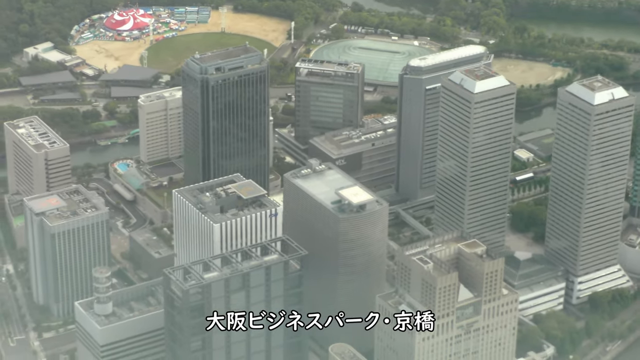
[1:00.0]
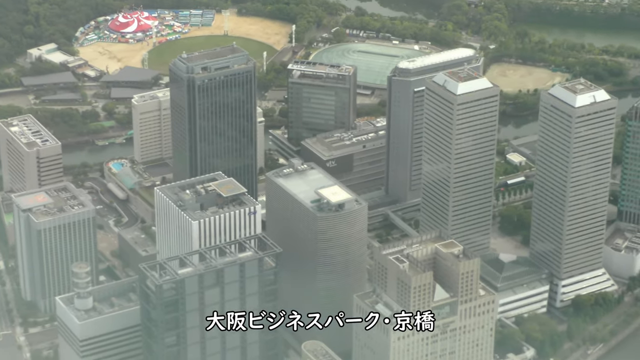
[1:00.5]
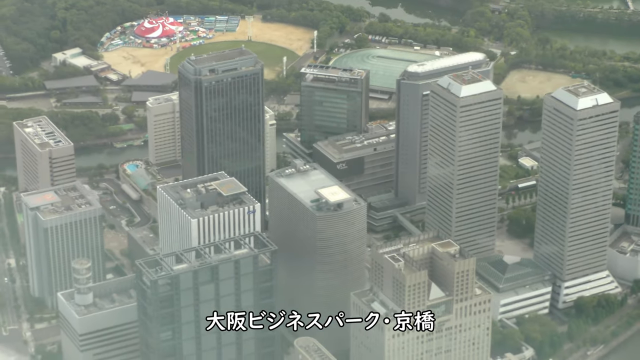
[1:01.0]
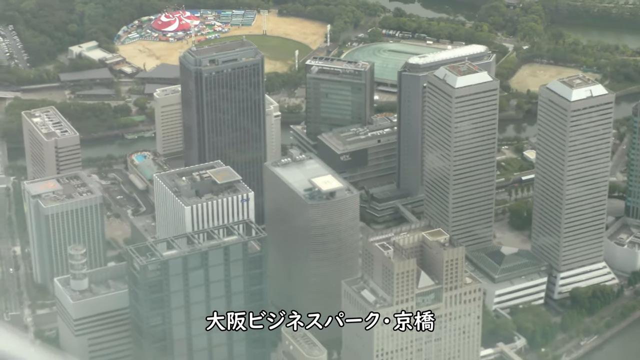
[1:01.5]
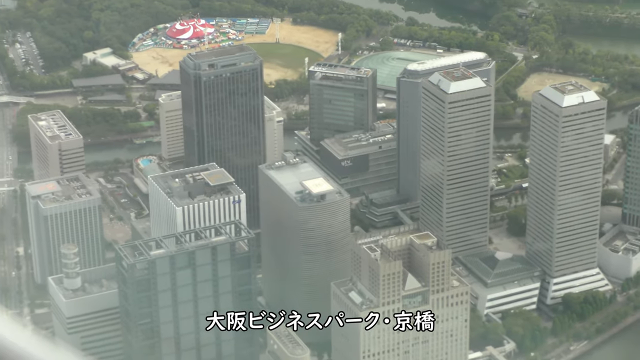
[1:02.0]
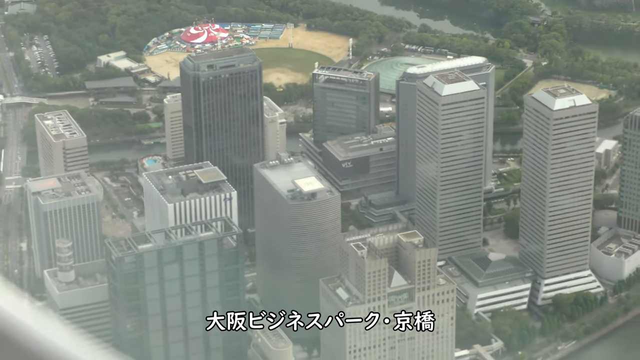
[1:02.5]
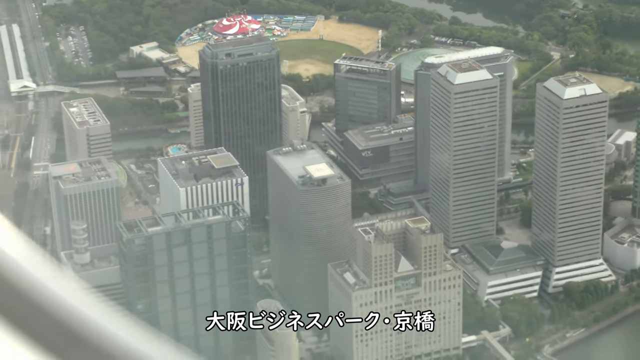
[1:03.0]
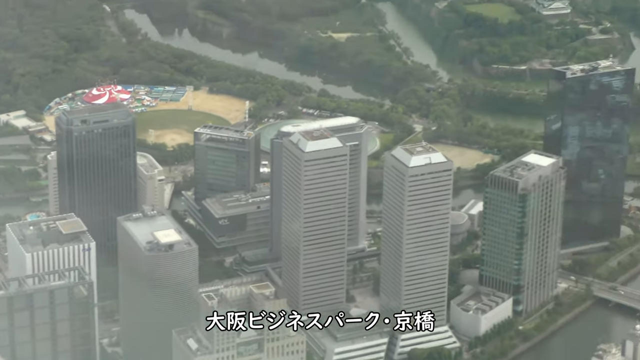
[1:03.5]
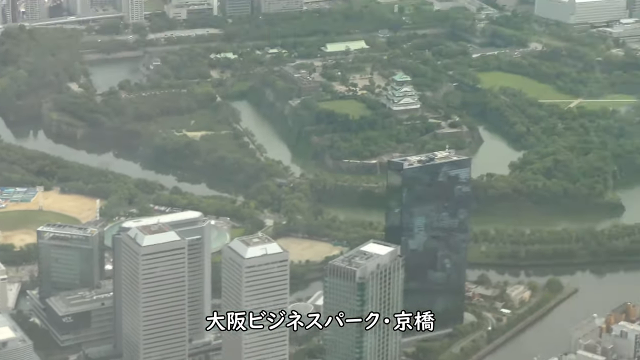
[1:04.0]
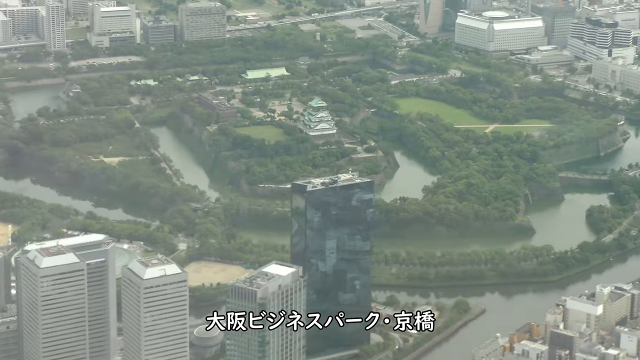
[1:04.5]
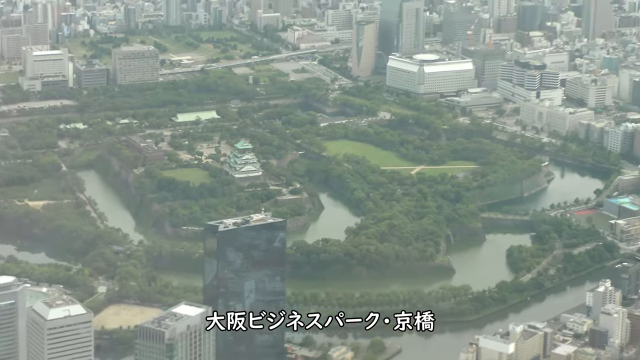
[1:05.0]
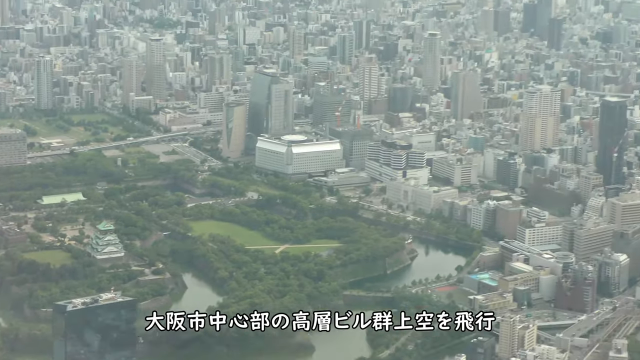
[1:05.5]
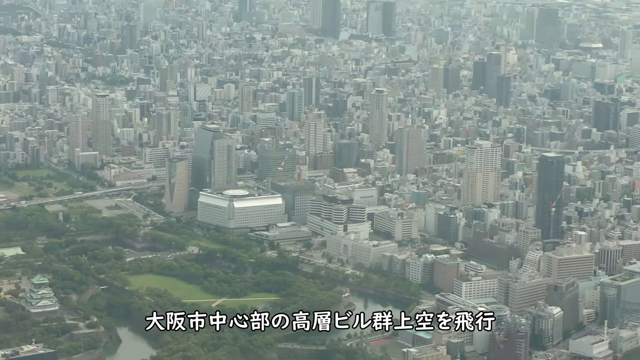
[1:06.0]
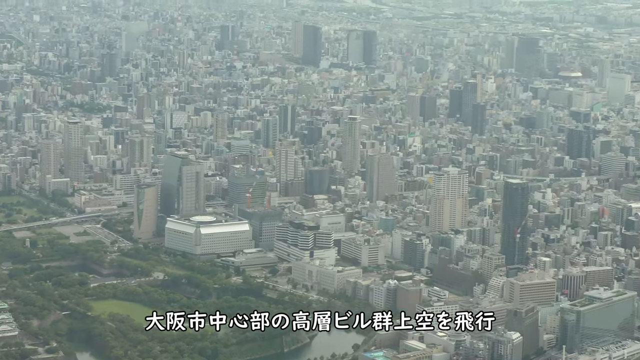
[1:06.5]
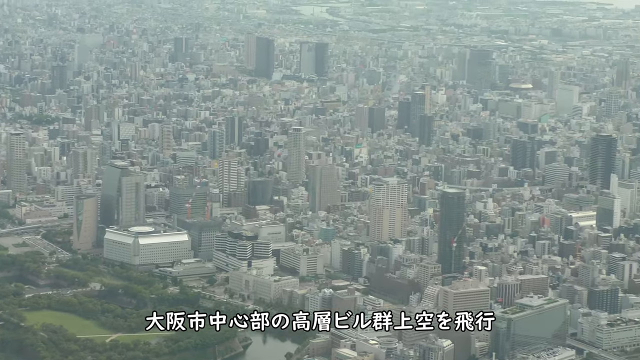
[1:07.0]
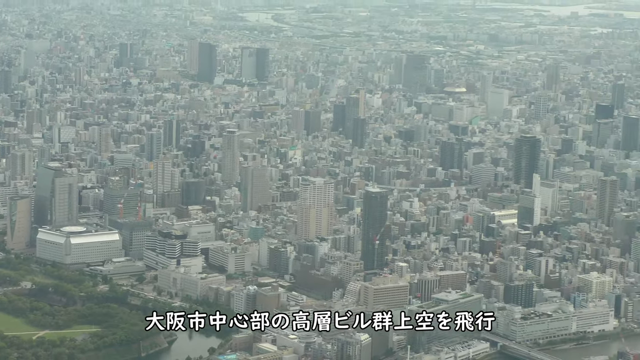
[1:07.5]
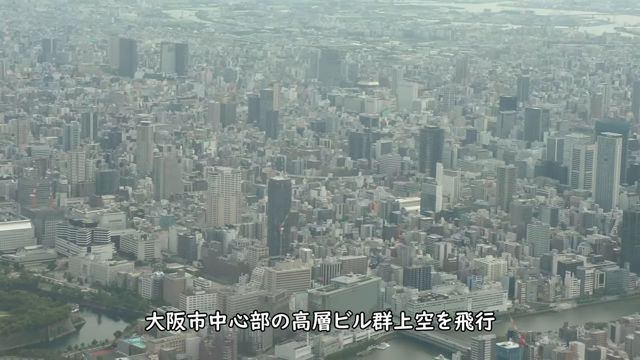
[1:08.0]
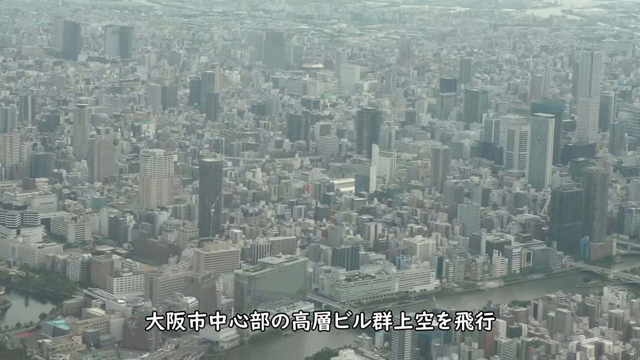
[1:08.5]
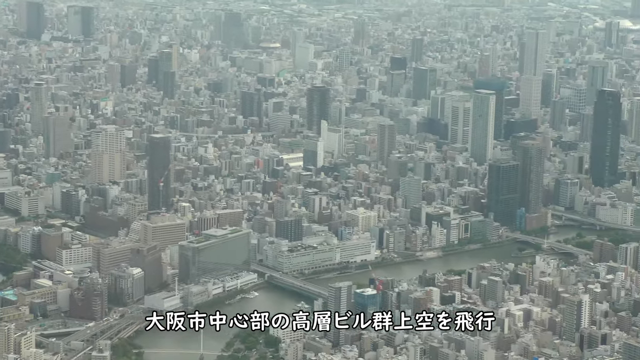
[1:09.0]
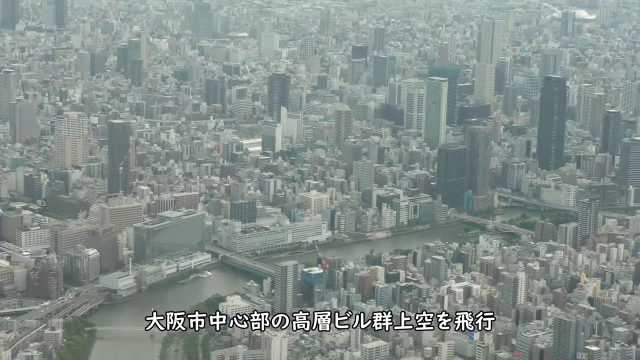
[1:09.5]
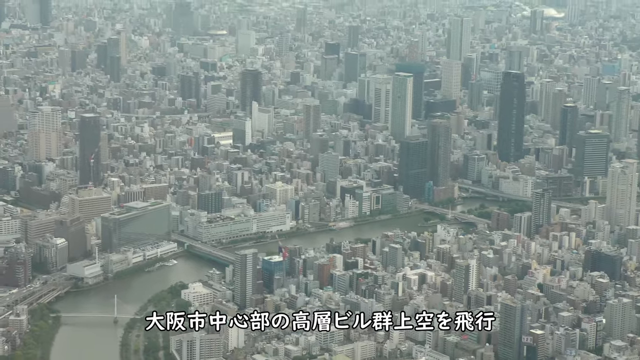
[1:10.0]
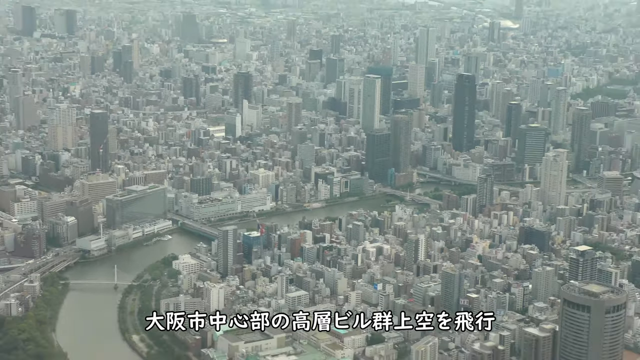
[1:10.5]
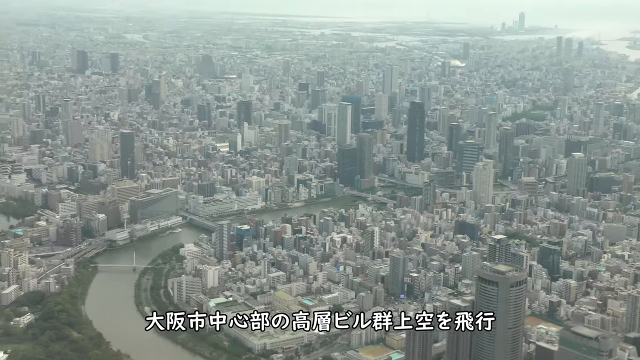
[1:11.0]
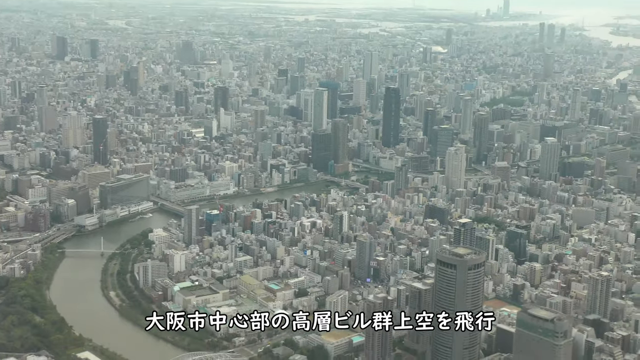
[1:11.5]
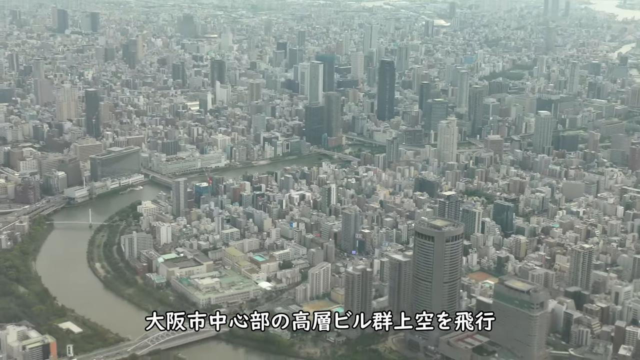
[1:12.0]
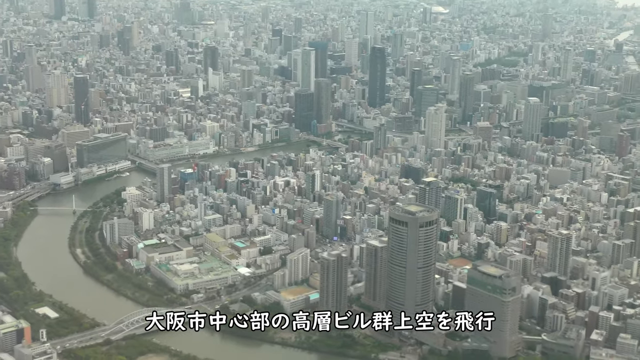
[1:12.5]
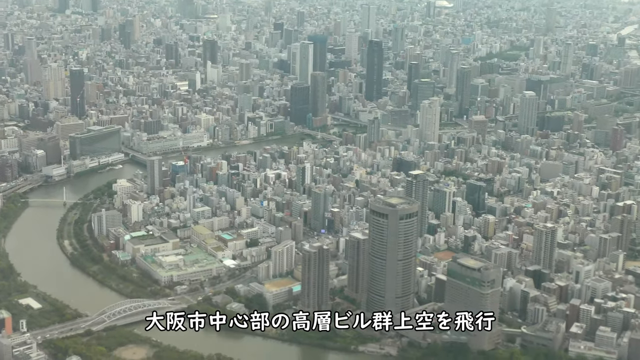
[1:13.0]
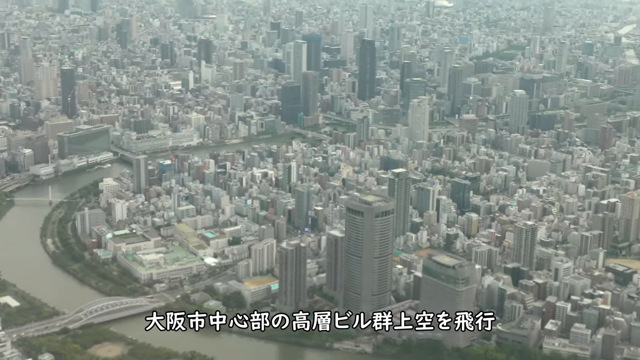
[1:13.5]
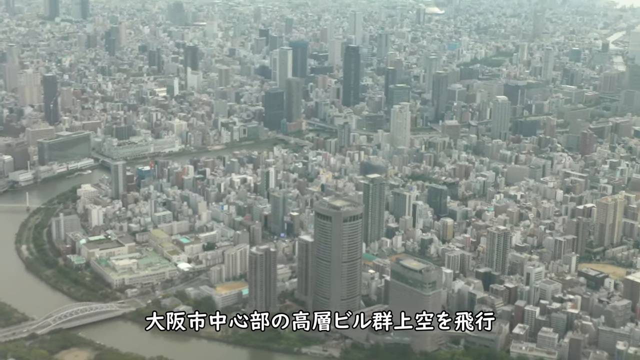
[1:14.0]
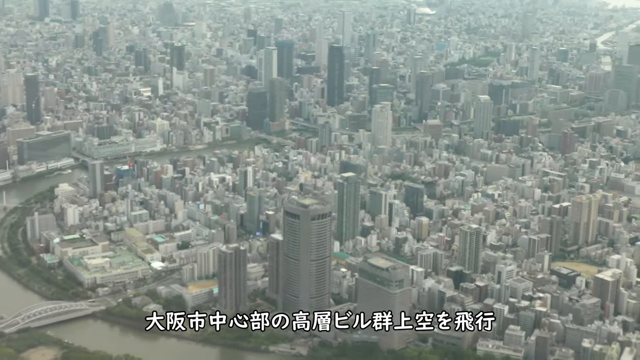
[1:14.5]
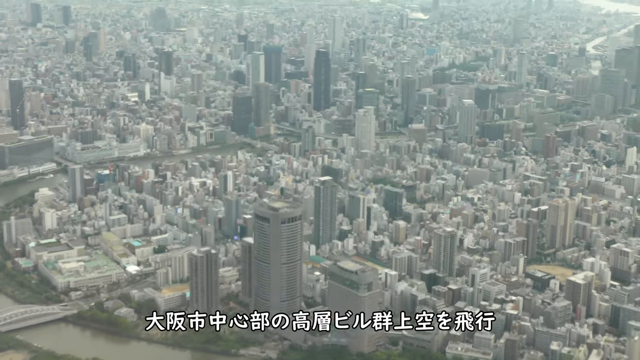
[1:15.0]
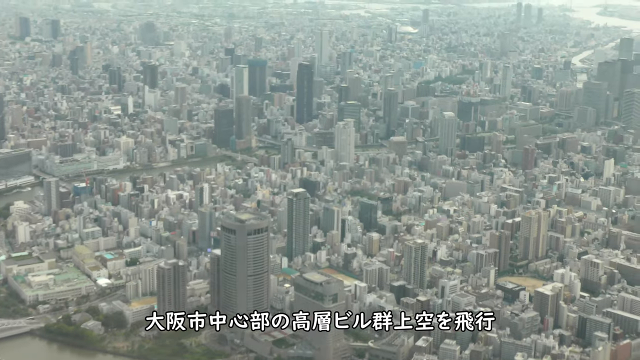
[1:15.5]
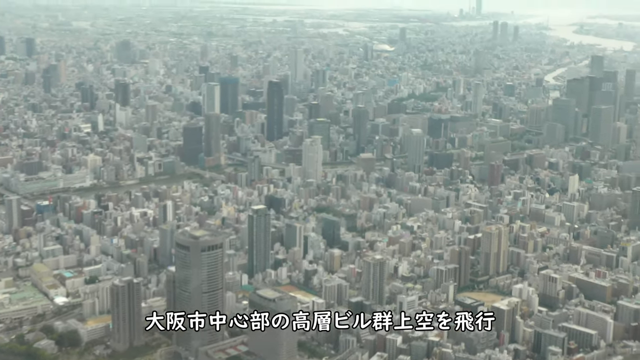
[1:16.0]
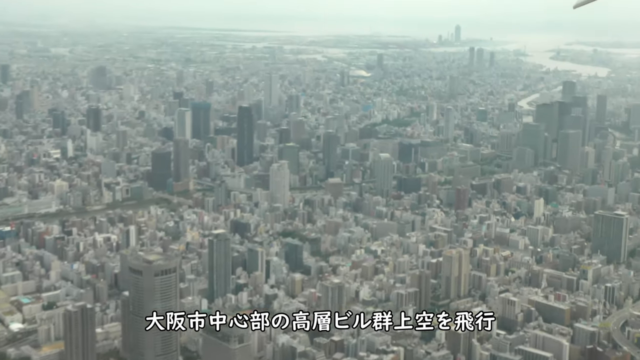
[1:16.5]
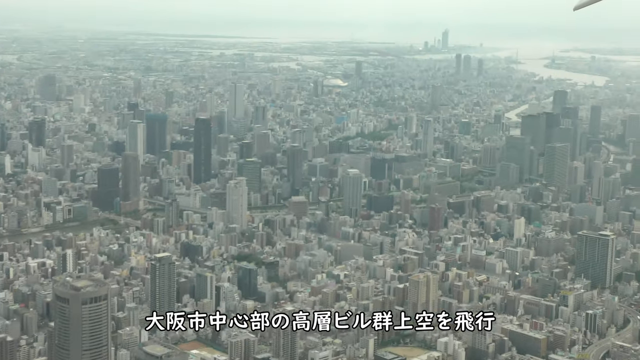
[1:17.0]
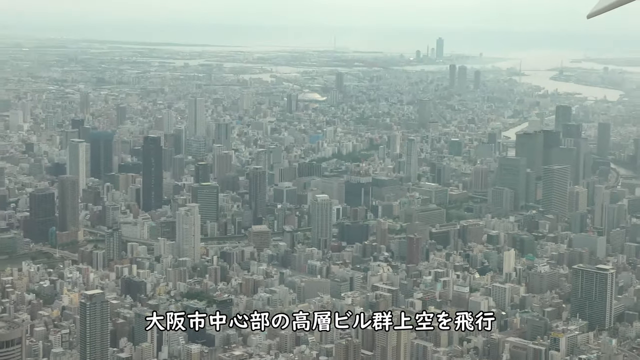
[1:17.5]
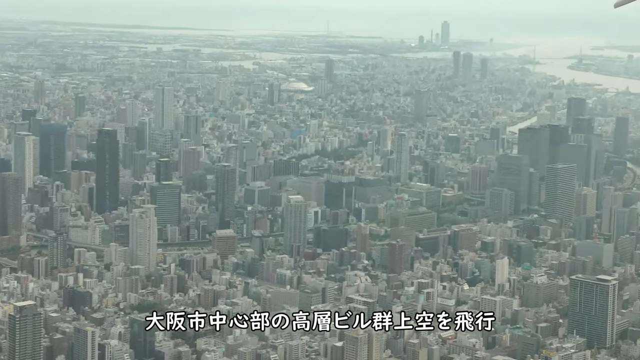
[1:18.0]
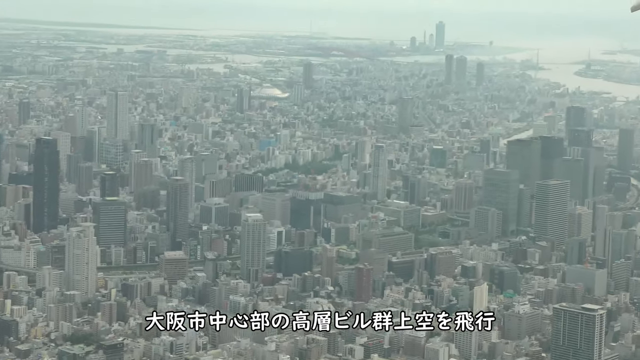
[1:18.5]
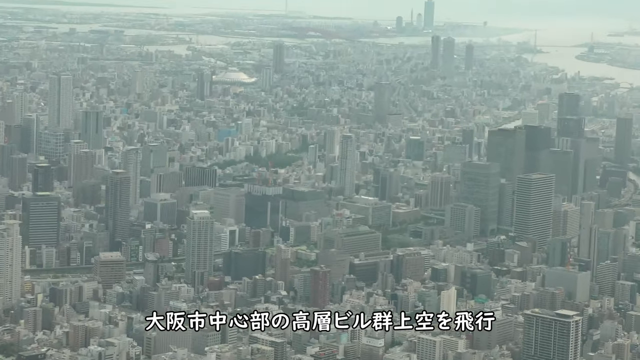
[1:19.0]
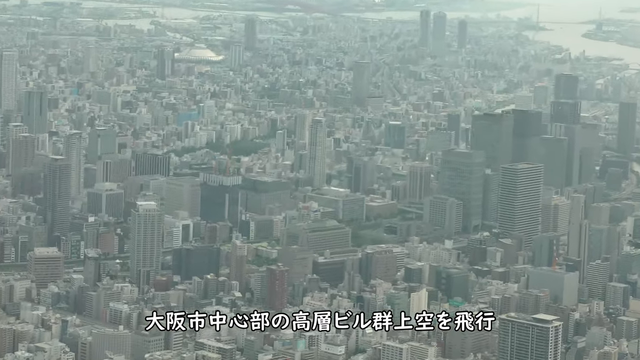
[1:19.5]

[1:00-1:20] The aerial tour of Tokyo continues, showing the park with what appears to be a track and field and a baseball stadium. There is a quick close-up of the center of the park, which has a couple of buildings in the center. The buildings around the park appear very tall. The camera pans back out, showing the heart of the city, where the buildings are mostly pretty tall with shorter ones in the mix, ranging from light gray to dark colors such as black. A winding river goes through the center of Tokyo. The camera then zooms in on other buildings around the town. Japanese letters in bold white lettering are at the bottom of the screen.